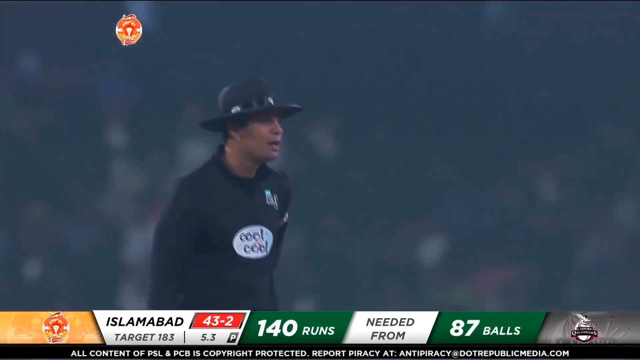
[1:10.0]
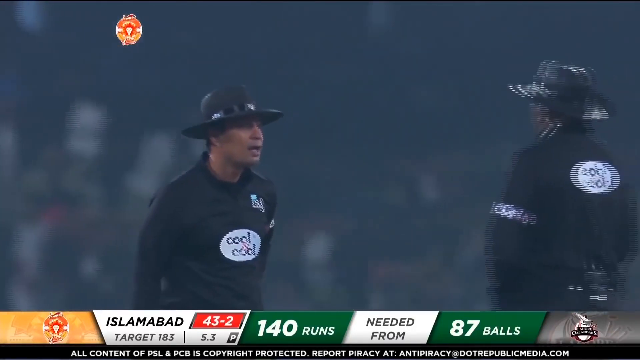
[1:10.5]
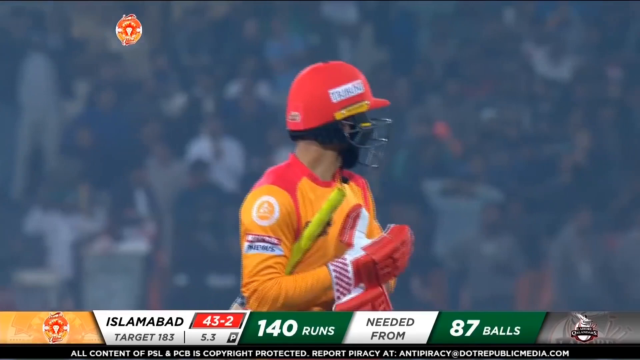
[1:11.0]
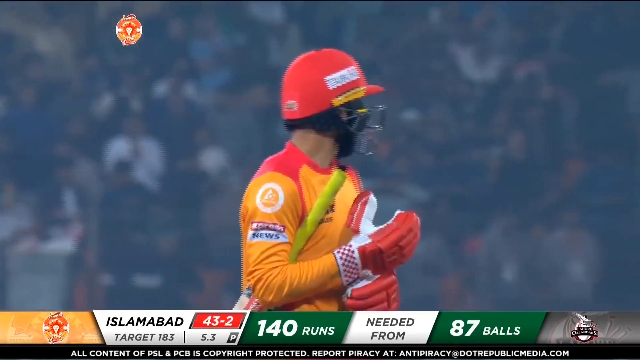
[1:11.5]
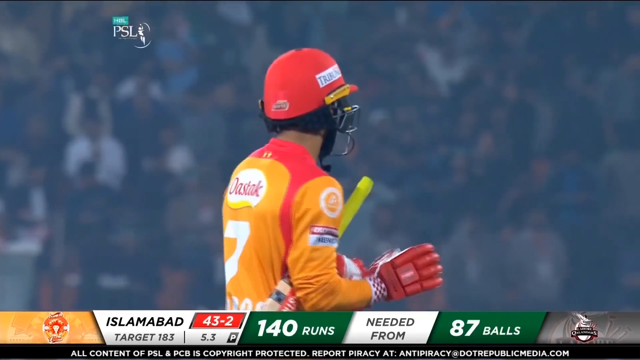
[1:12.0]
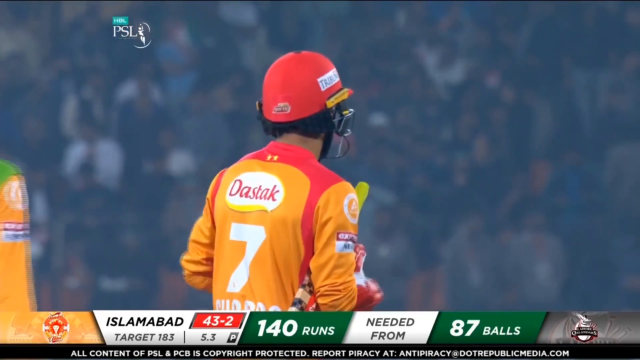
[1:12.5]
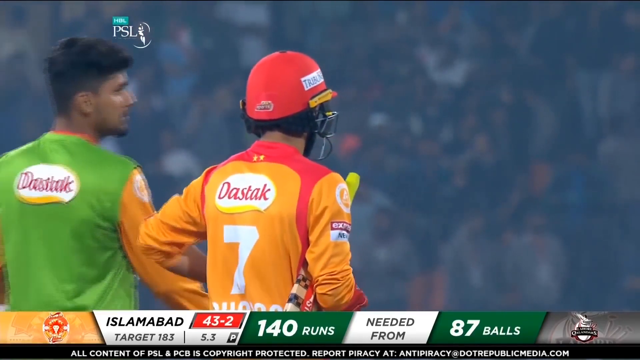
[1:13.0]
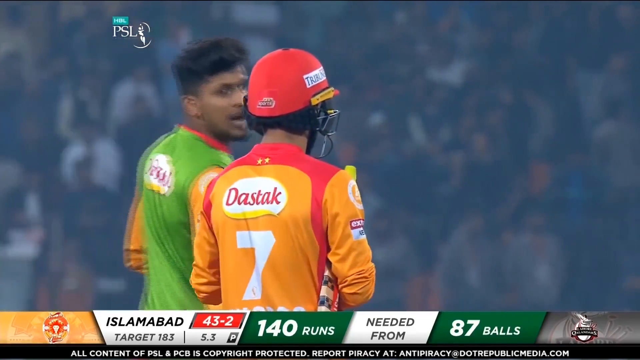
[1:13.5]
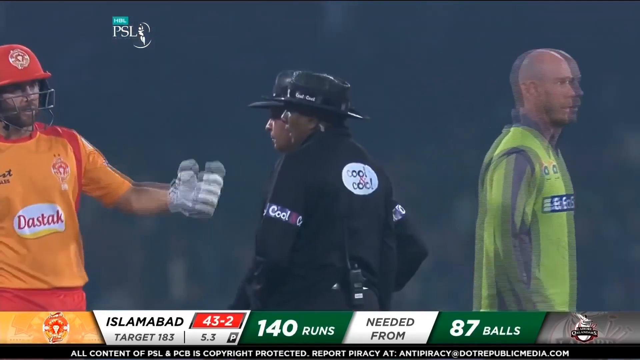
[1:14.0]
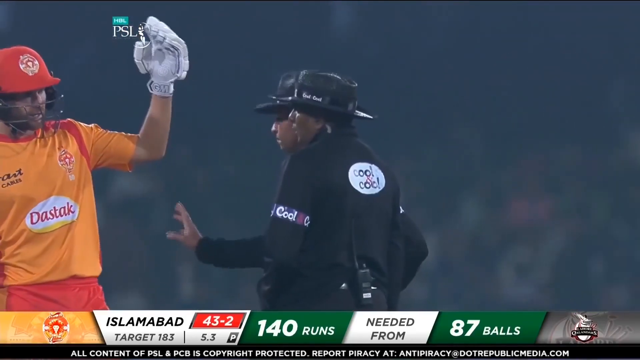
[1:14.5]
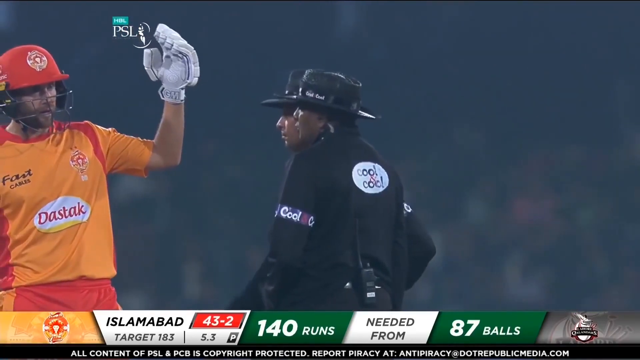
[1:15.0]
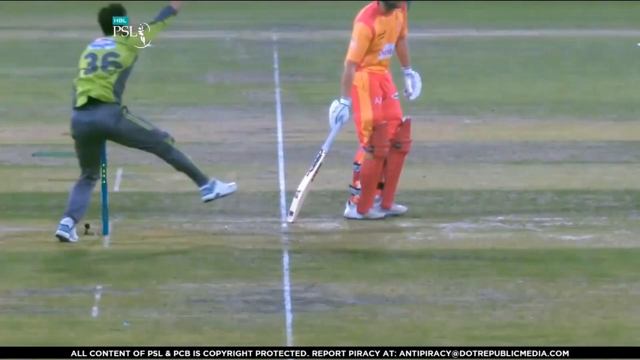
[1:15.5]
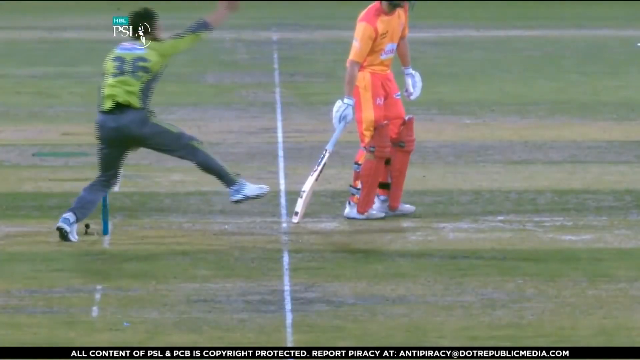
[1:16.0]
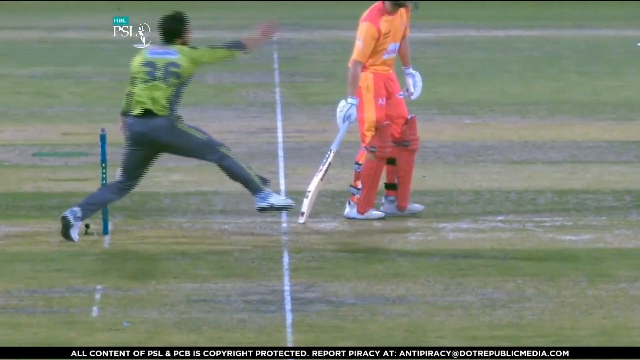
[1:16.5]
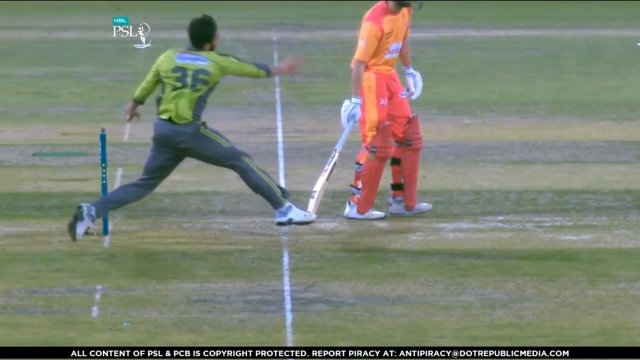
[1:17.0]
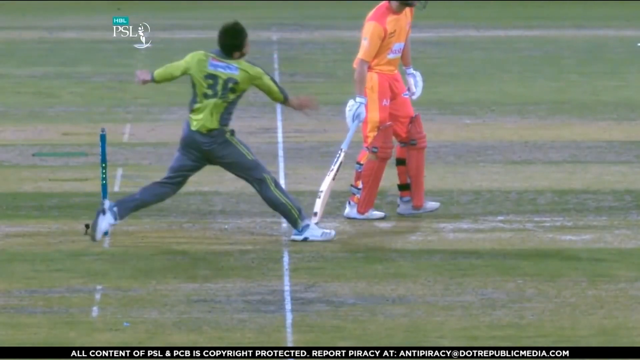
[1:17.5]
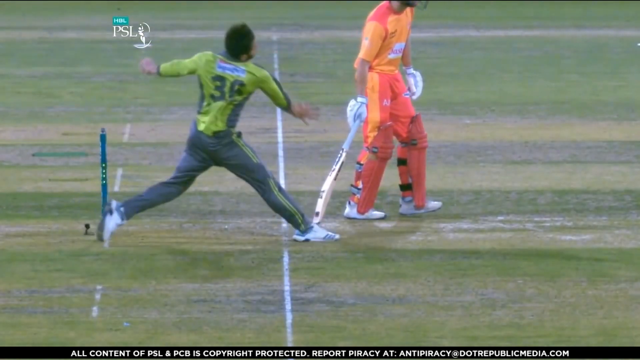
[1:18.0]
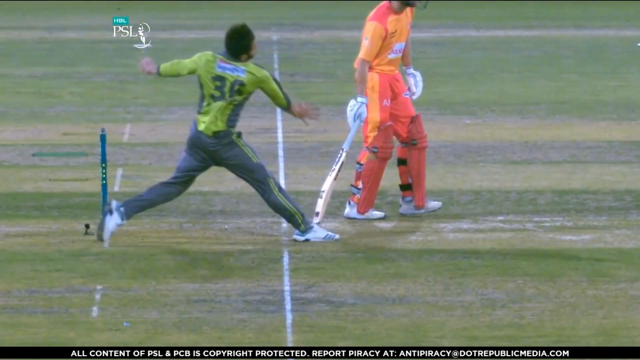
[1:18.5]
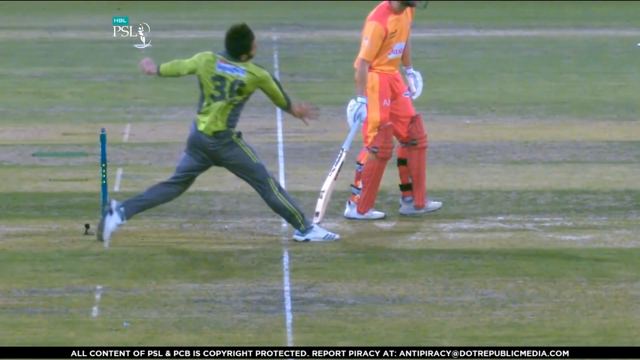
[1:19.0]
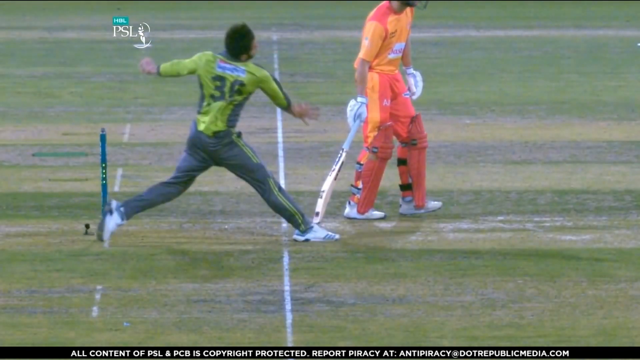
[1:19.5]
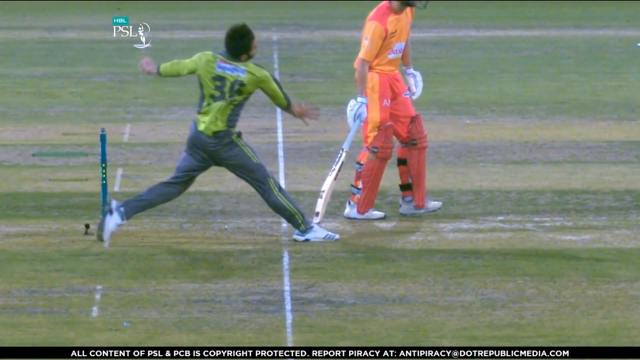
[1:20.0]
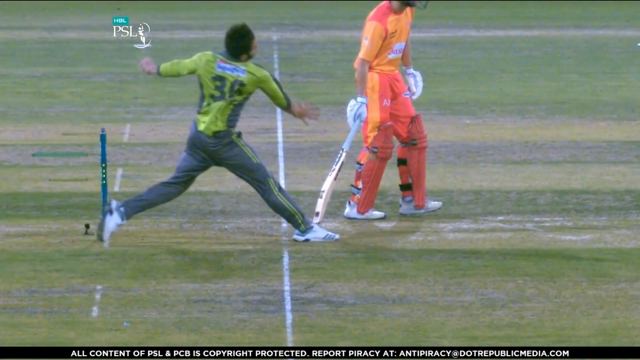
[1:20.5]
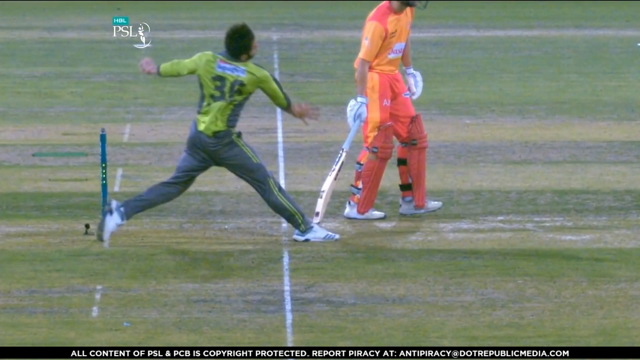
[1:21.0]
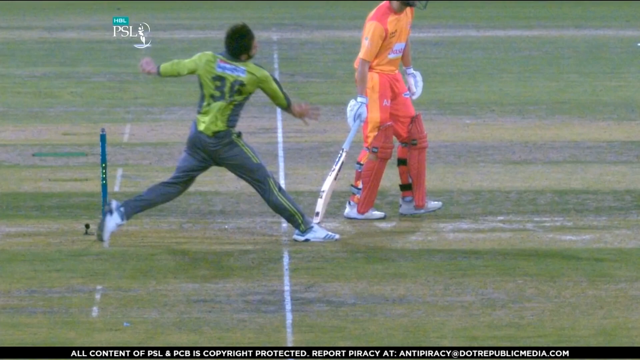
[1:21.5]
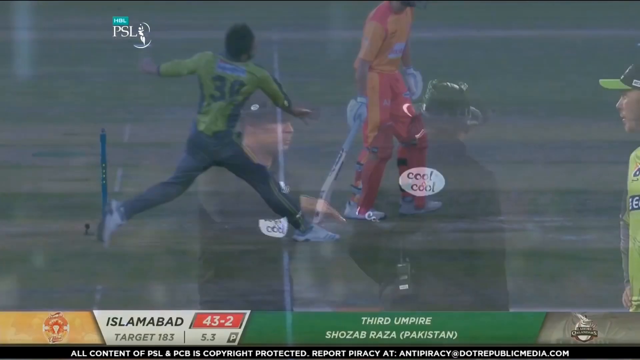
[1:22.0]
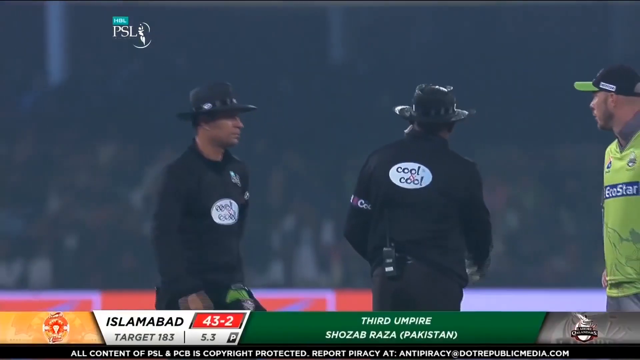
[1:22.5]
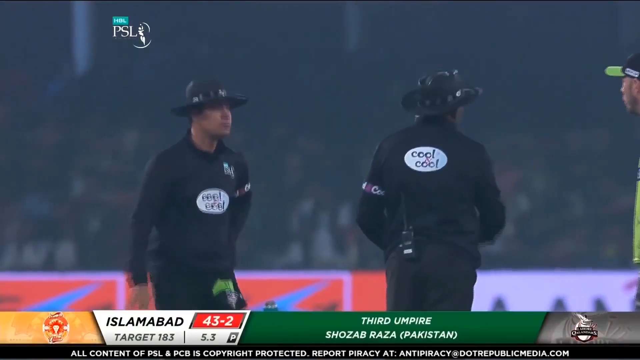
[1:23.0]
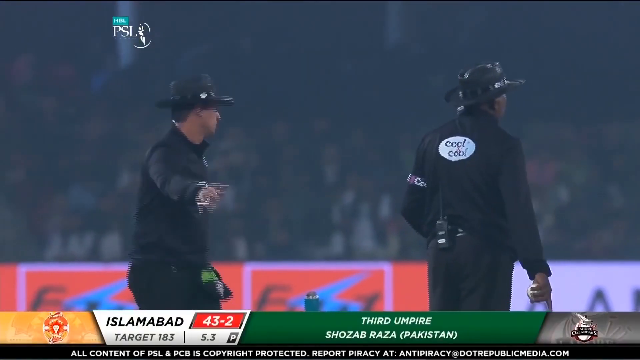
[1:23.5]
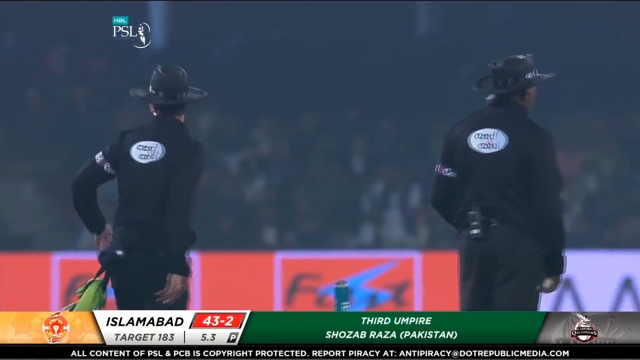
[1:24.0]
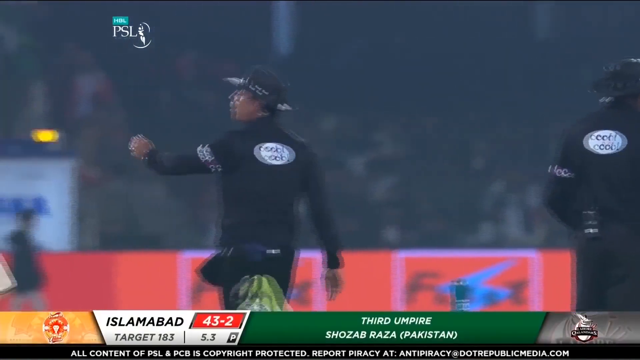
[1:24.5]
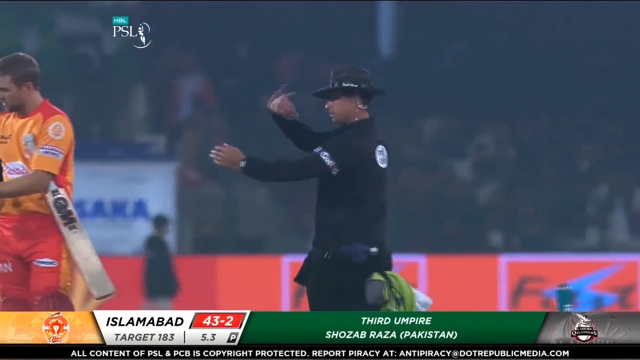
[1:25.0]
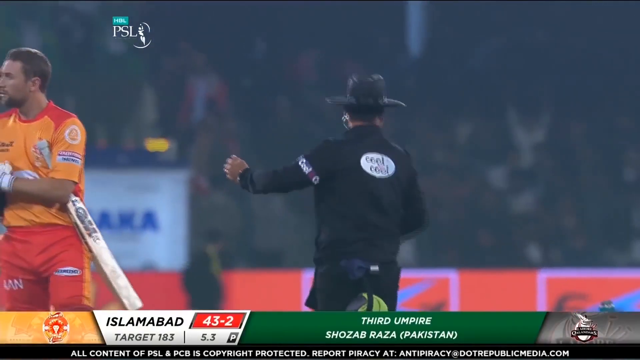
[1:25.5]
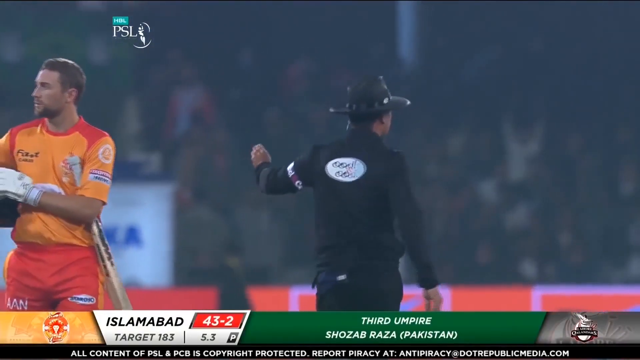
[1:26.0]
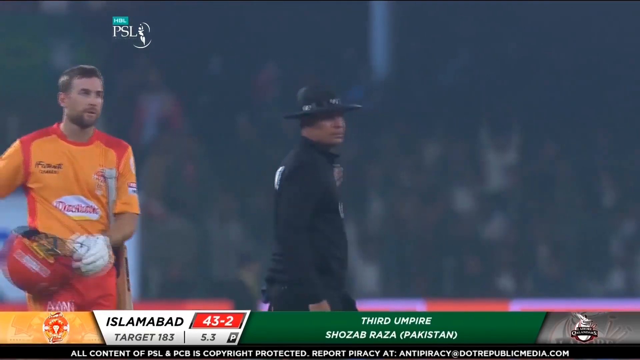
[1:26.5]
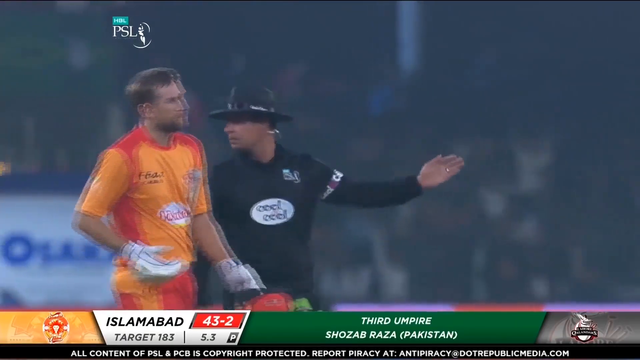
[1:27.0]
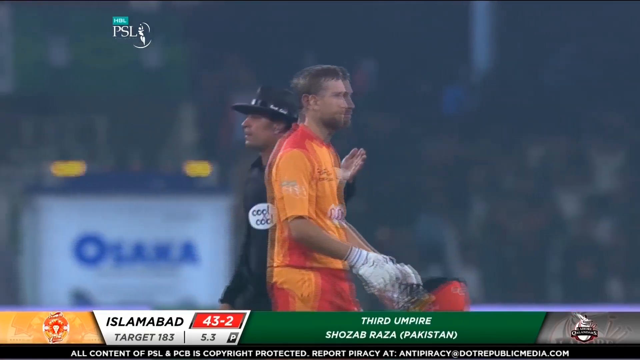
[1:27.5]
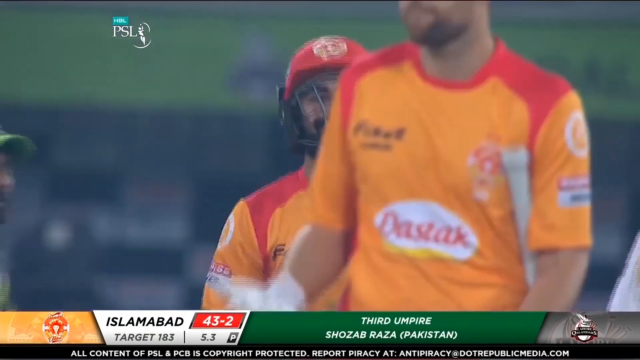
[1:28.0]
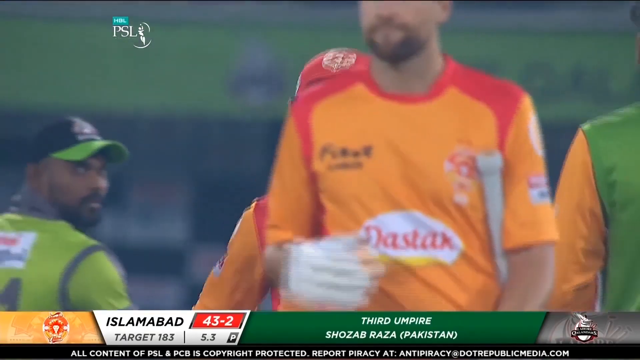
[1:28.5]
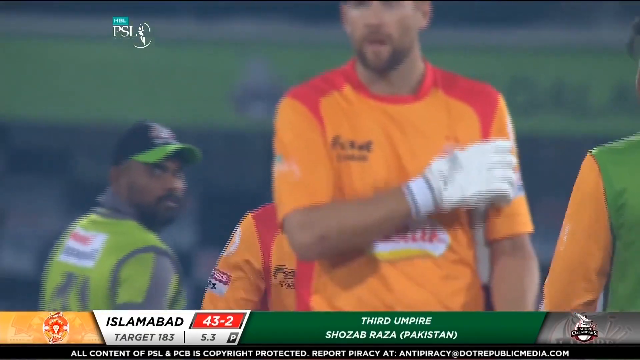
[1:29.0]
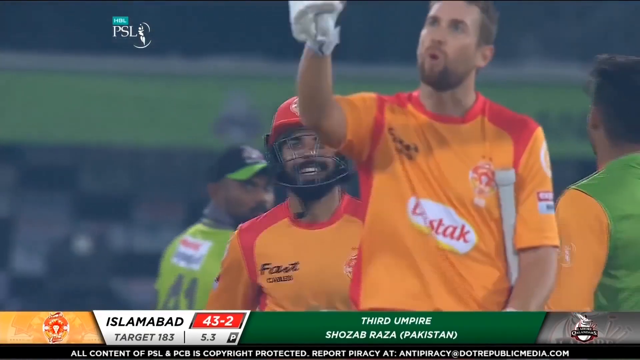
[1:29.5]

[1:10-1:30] The two umpires stop for a conversation and talk to one of the Islamabad players, whose shirt is sponsored by a firm called Dastak. An action replay of the bowler running in shows that he has overstepped: as he steps down to deliver, his right foot, in a white boot, is over the white no-ball line. It is a no ball, so the dismissal is overturned, leaving Islamabad on 43 runs with only two wickets down, still needing 140 from 87. One of the batsmen is European.